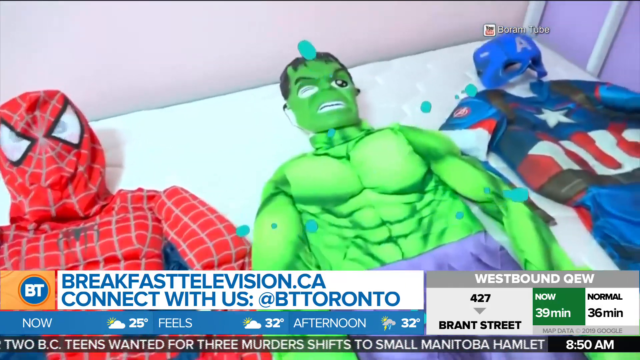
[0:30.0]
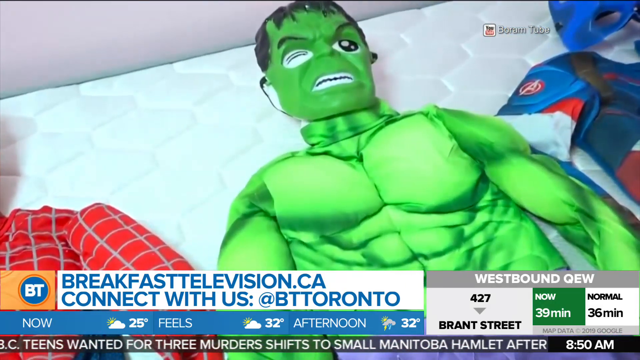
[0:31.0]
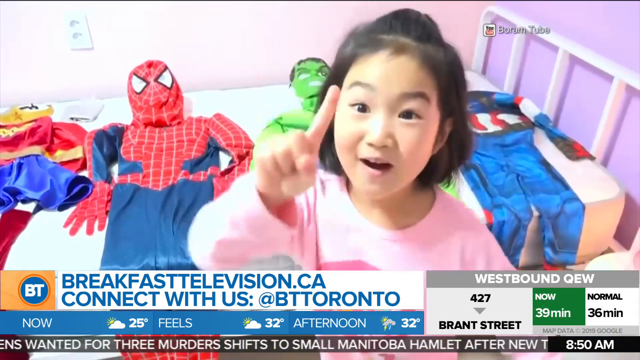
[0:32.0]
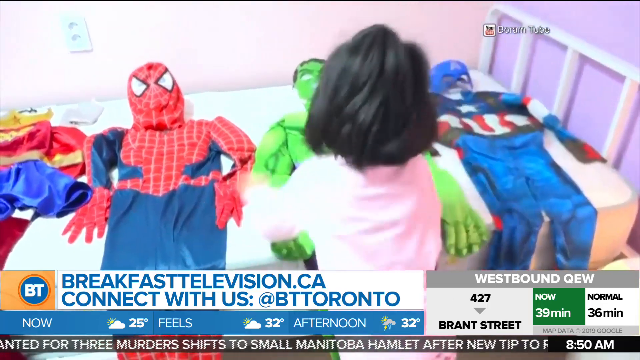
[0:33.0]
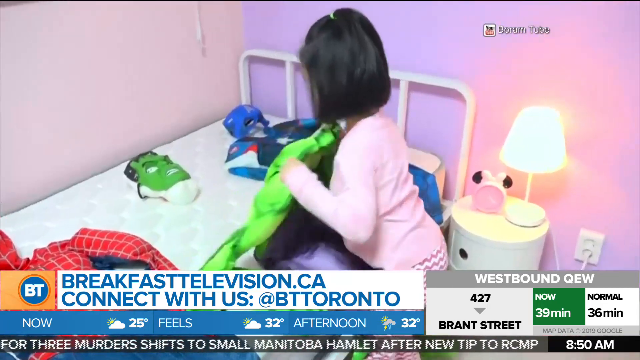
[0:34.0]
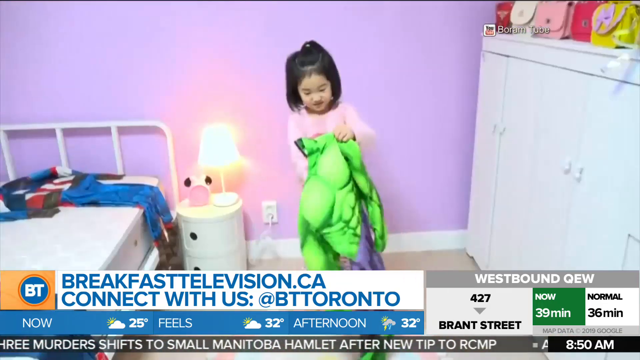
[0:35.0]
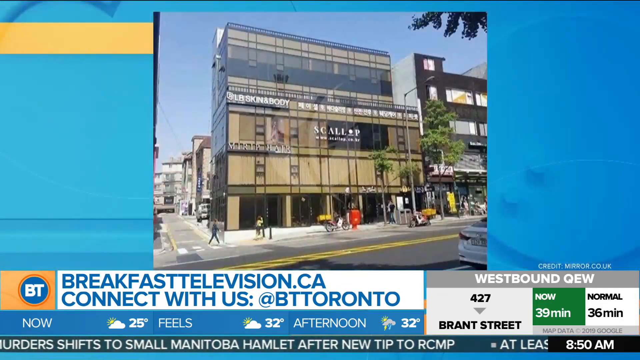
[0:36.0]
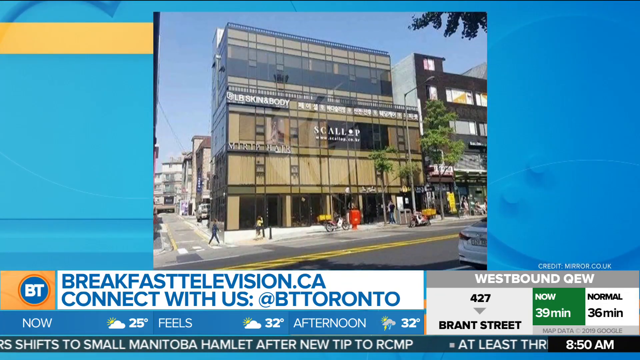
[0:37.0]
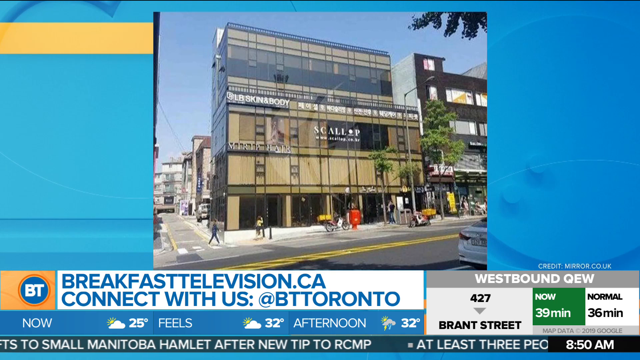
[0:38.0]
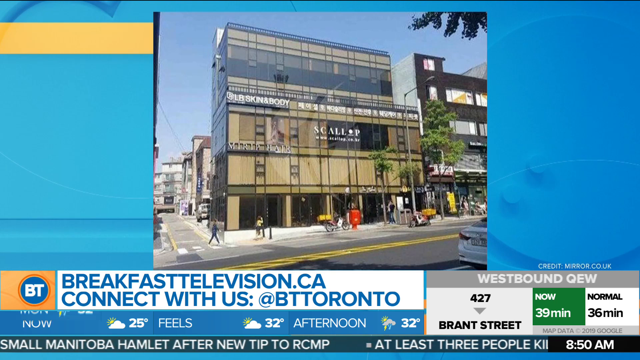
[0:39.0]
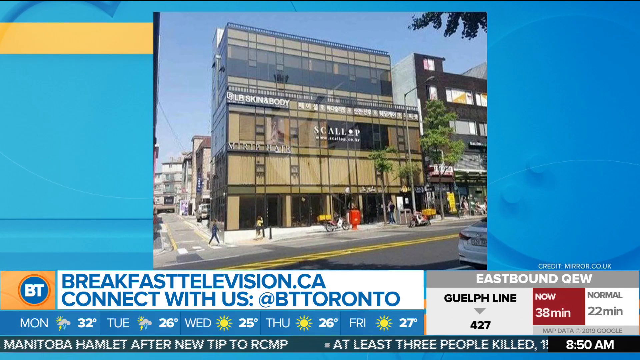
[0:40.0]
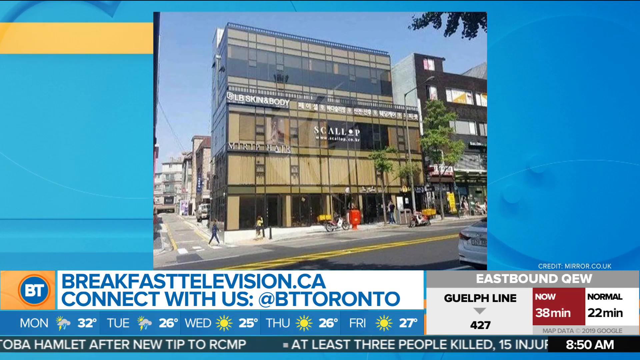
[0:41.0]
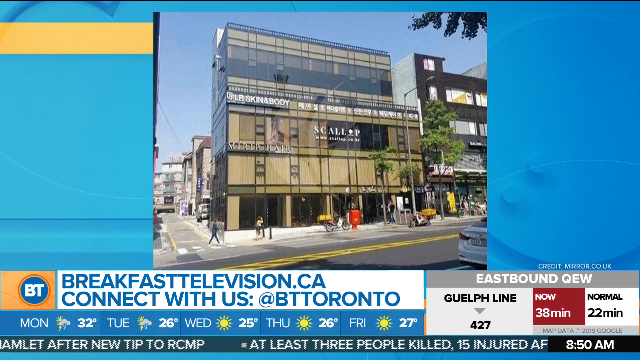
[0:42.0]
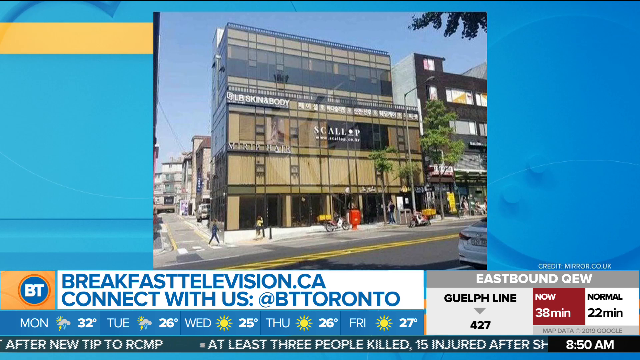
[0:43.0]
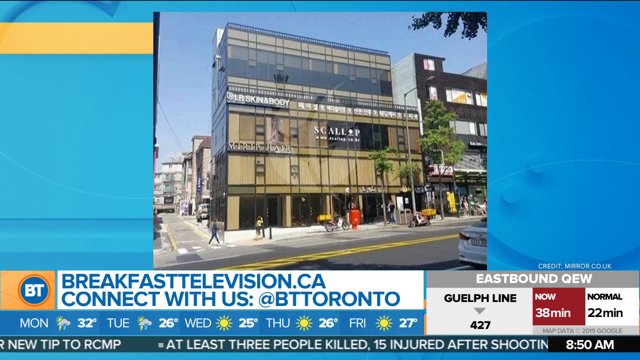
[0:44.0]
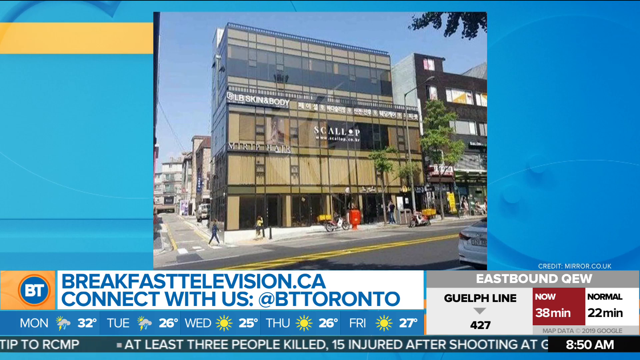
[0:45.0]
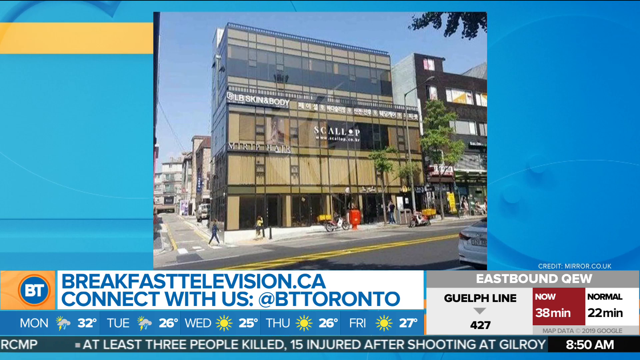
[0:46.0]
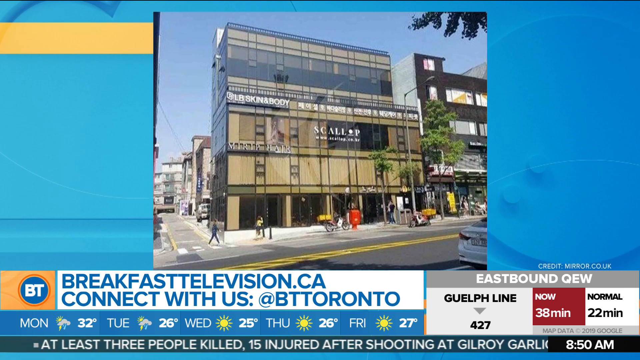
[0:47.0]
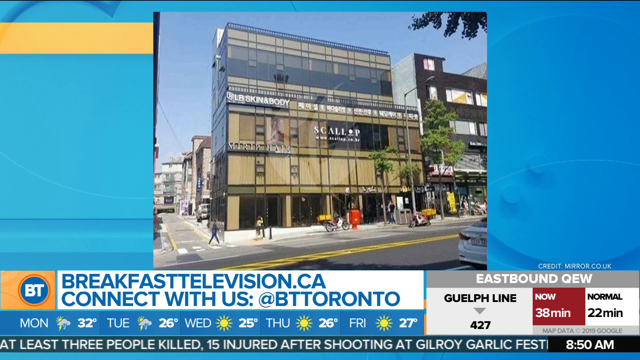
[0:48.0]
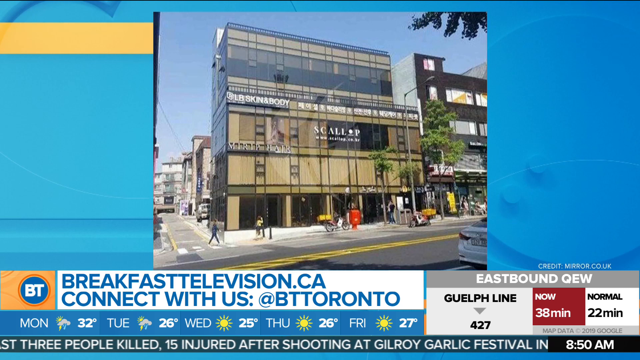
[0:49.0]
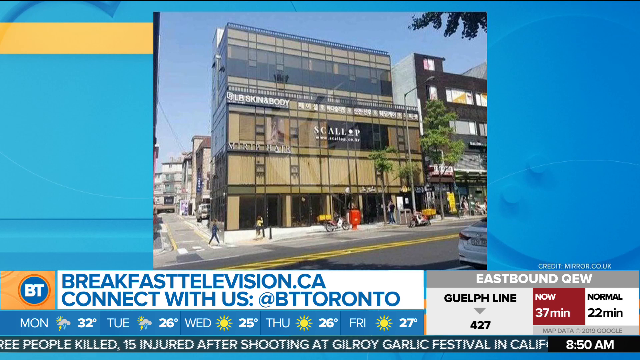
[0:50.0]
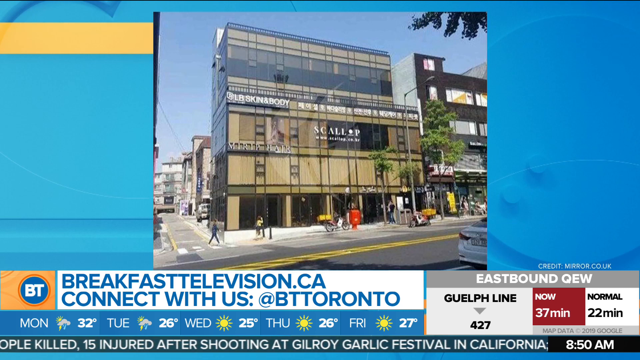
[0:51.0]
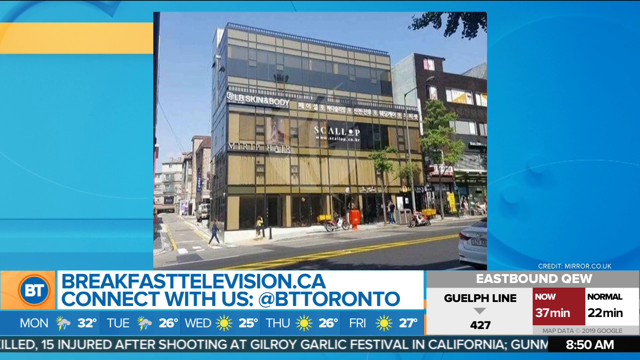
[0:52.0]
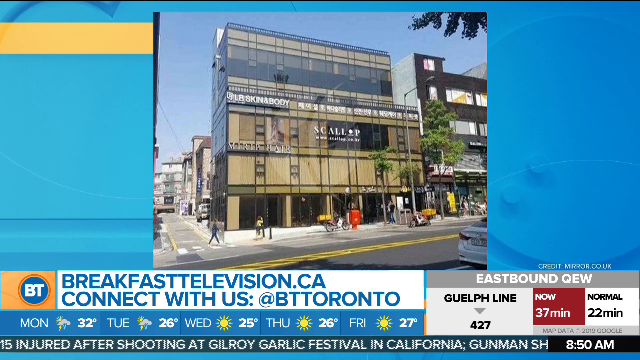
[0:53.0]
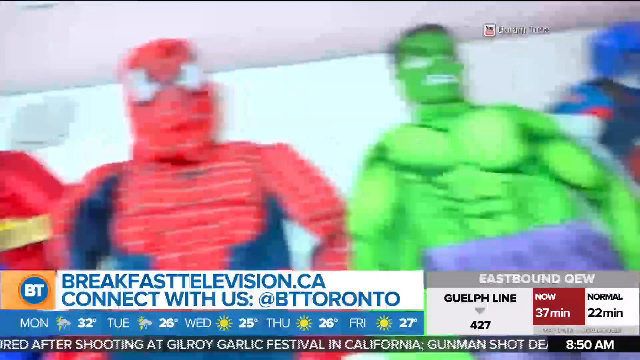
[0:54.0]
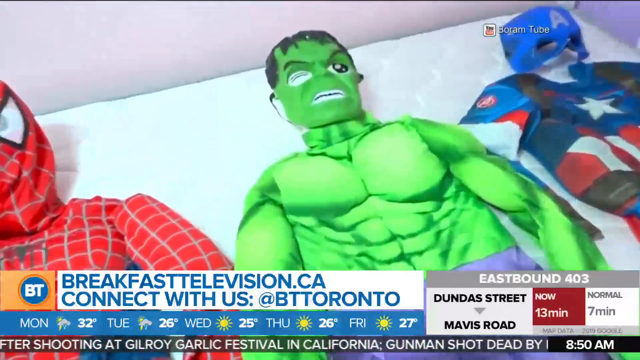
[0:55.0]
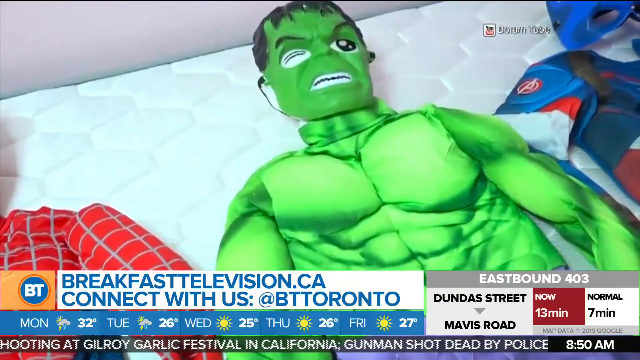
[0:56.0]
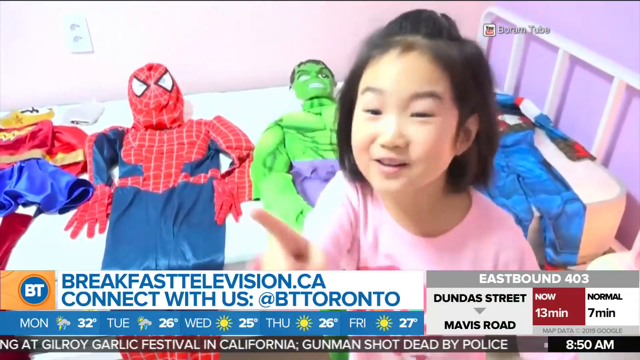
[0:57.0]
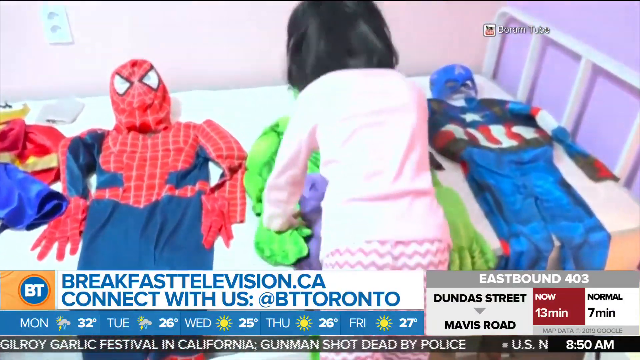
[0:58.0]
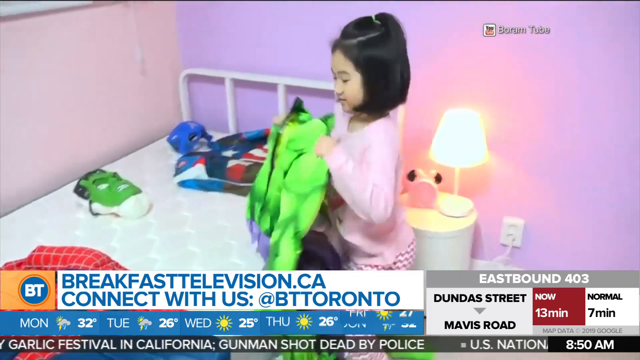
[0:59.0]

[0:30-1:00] The girl continues choosing what to wear; she turns around and puts her finger in the air as if she has an idea. The ticker stays in the same place on screen, still showing traffic and weather information. The girl settles on the Hulk costume and starts putting it on. The video then switches to a still image of a building, a shop apparently in Toronto called LB Skin and Body and Scallop. It then returns to the girl, repeating the footage of her choosing the Hulk costume, and she puts it on by stepping into it.